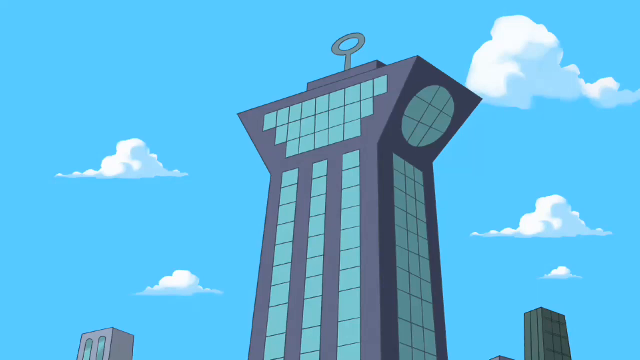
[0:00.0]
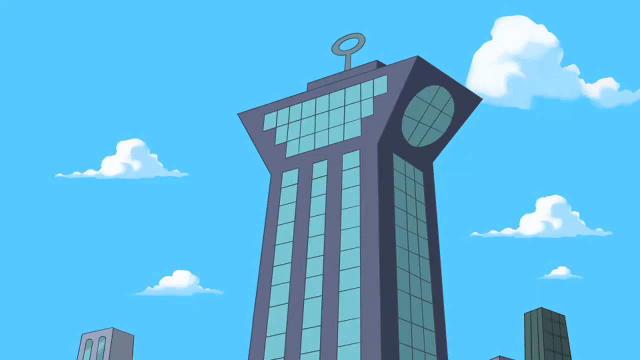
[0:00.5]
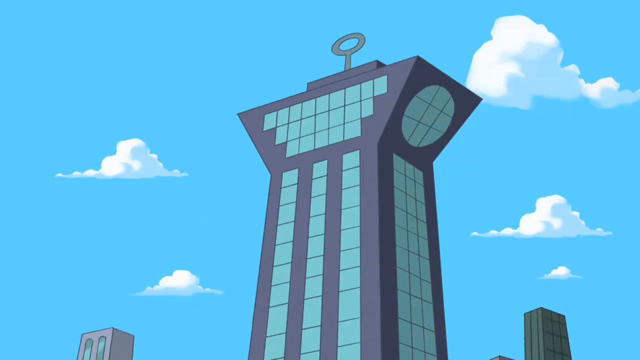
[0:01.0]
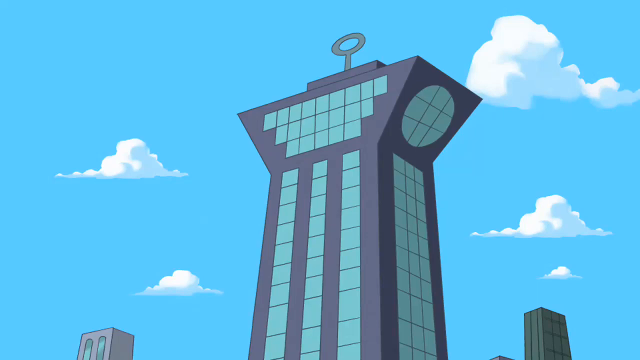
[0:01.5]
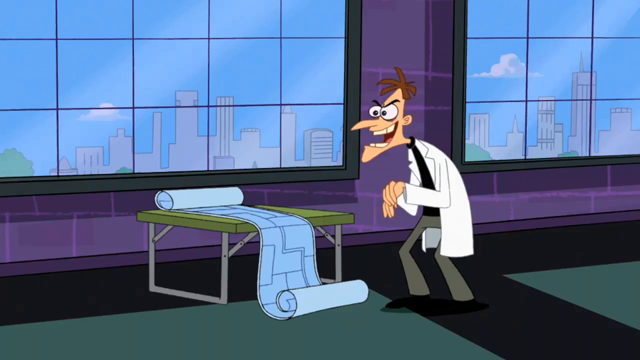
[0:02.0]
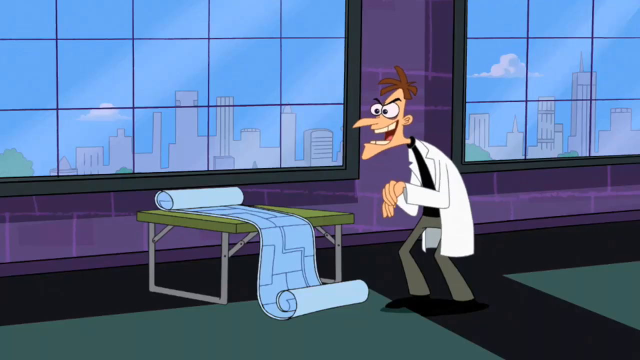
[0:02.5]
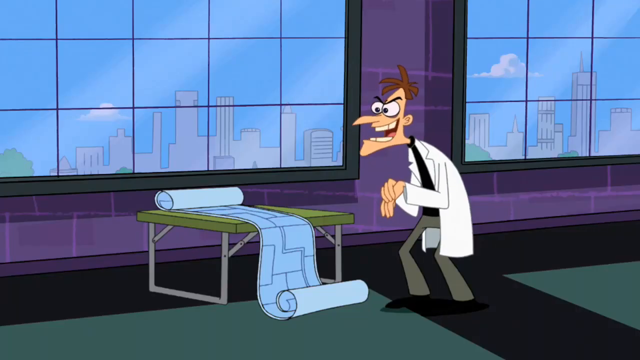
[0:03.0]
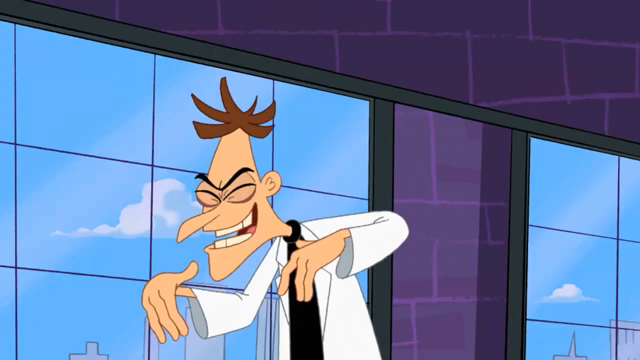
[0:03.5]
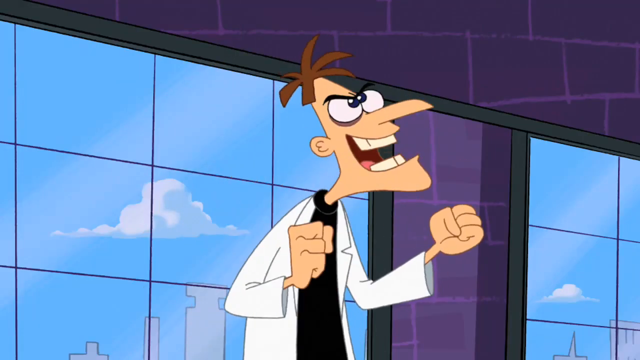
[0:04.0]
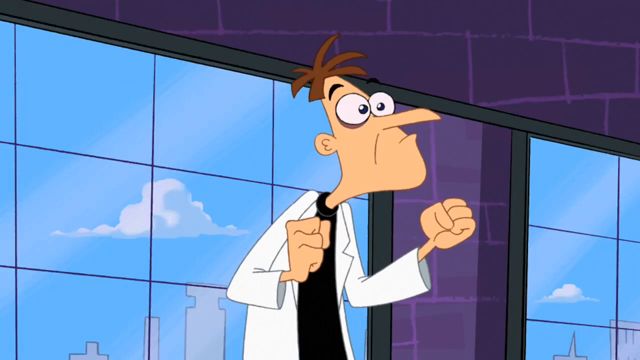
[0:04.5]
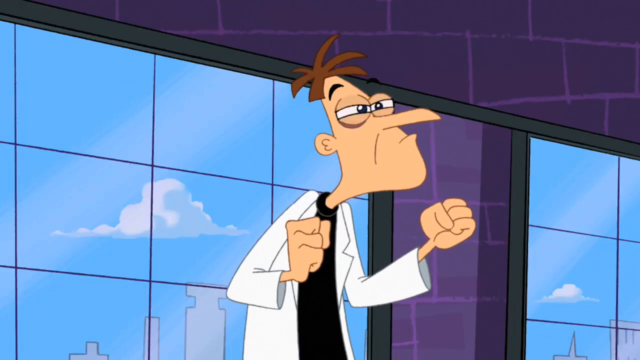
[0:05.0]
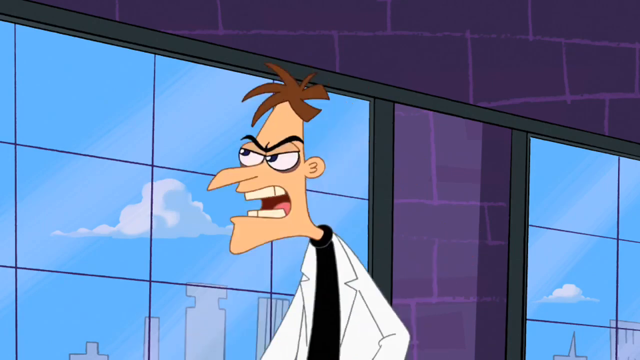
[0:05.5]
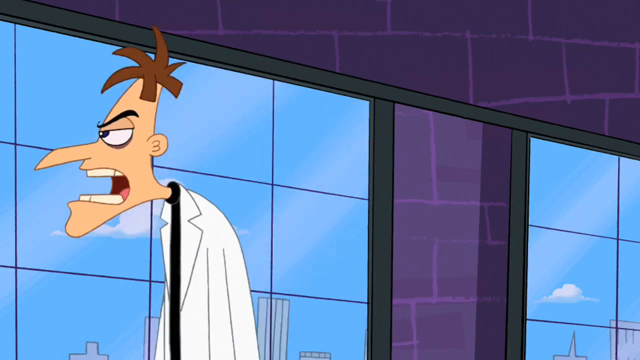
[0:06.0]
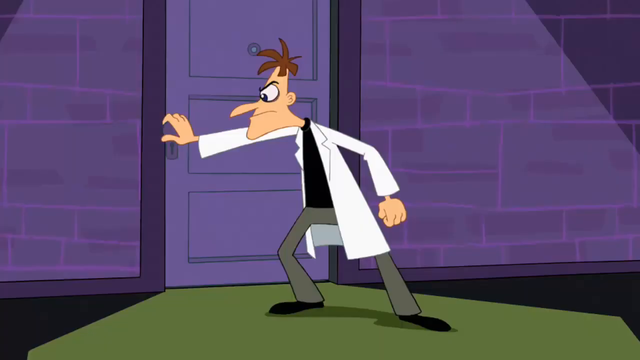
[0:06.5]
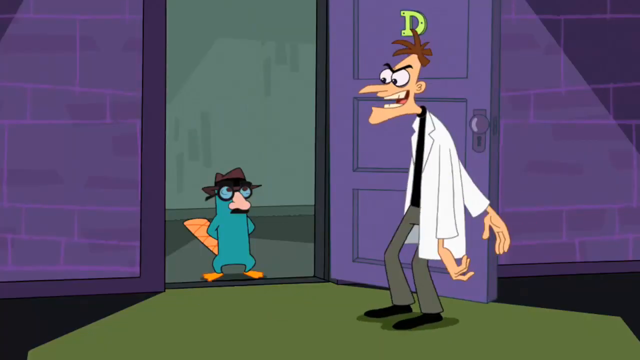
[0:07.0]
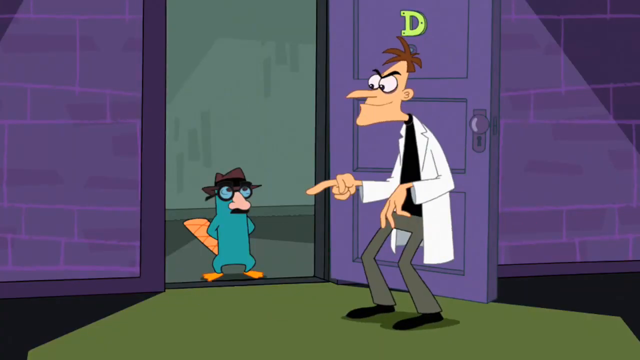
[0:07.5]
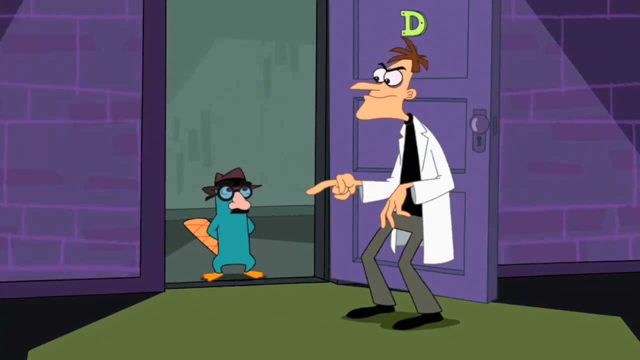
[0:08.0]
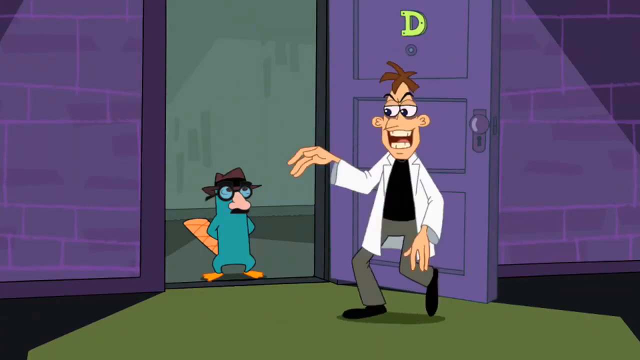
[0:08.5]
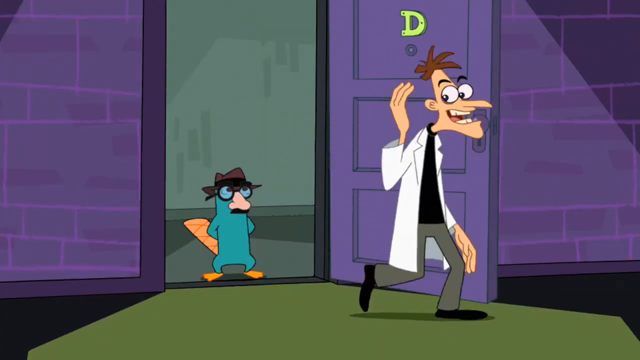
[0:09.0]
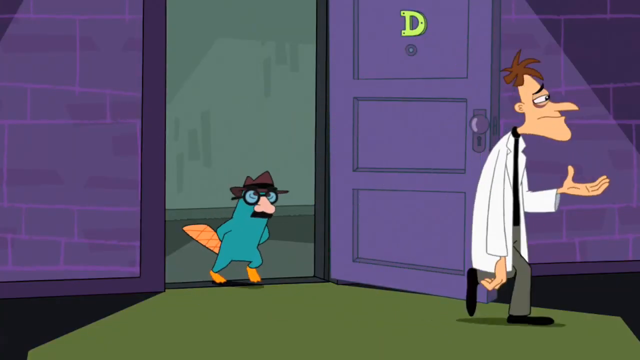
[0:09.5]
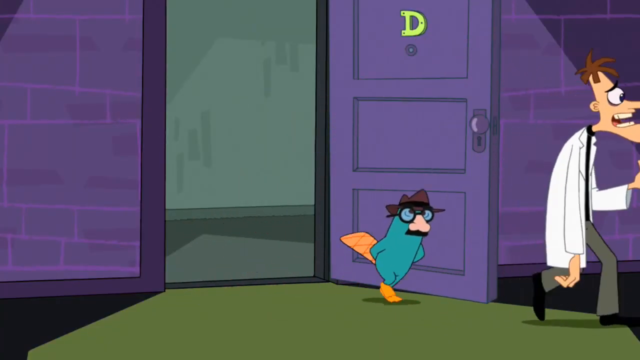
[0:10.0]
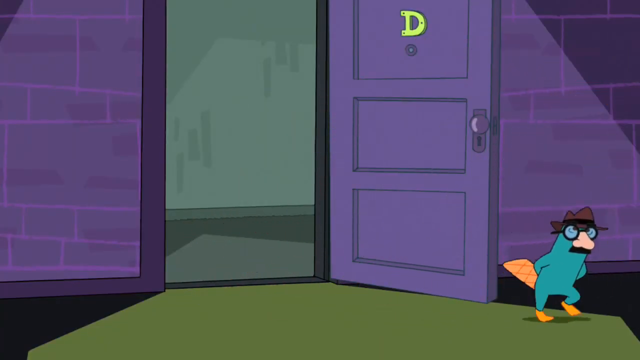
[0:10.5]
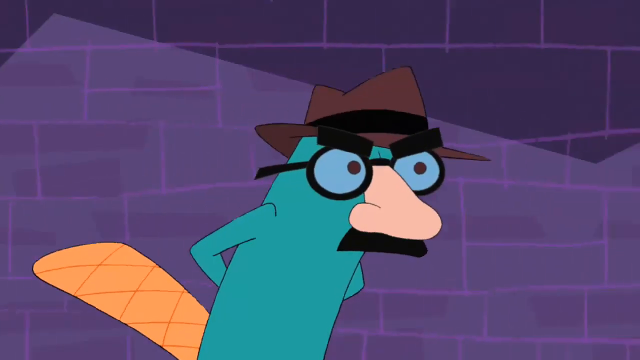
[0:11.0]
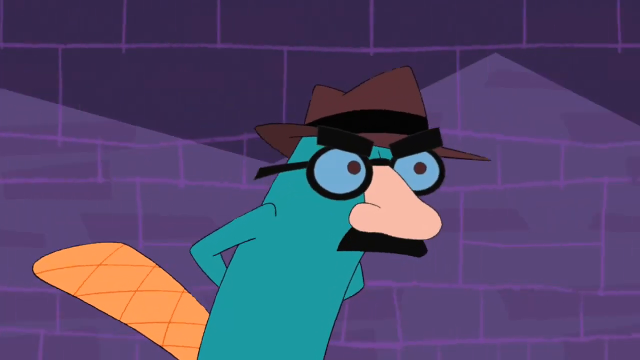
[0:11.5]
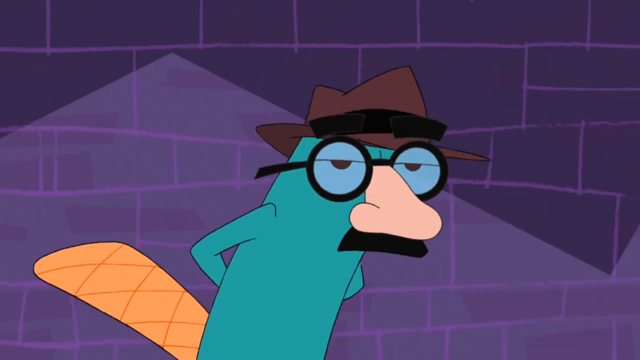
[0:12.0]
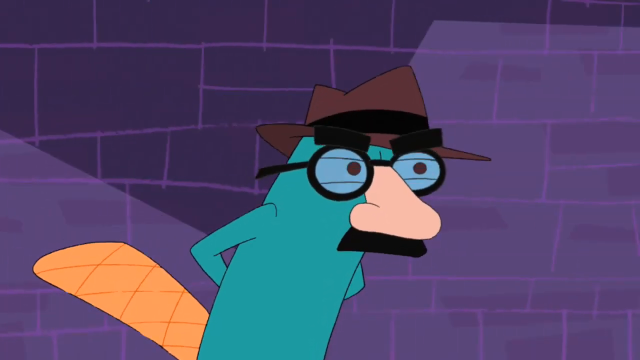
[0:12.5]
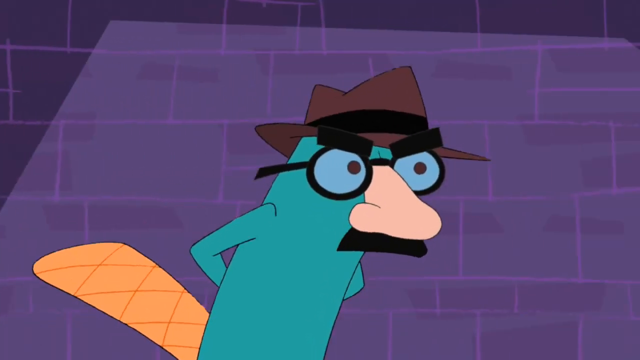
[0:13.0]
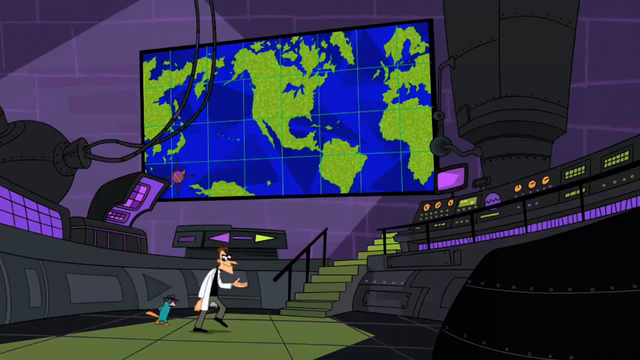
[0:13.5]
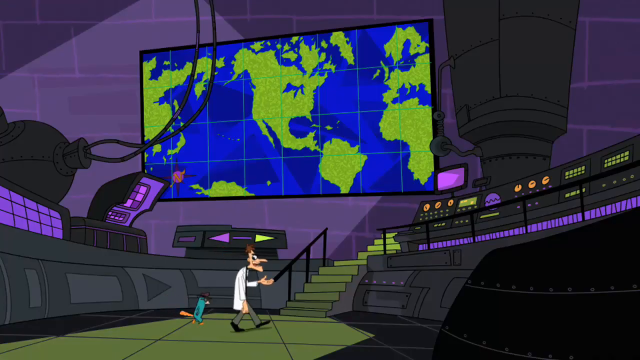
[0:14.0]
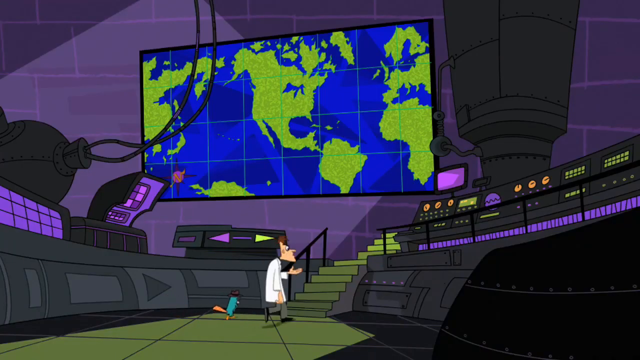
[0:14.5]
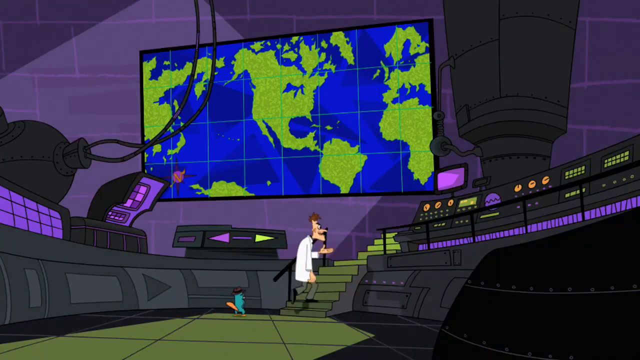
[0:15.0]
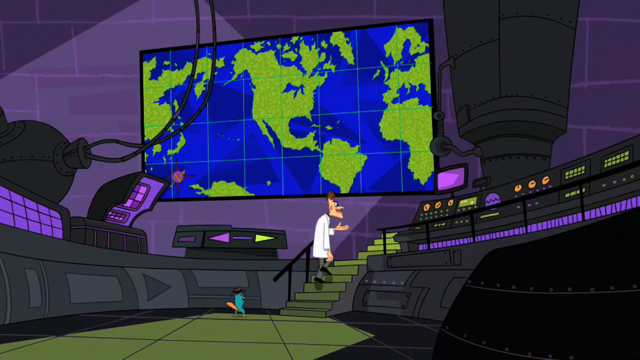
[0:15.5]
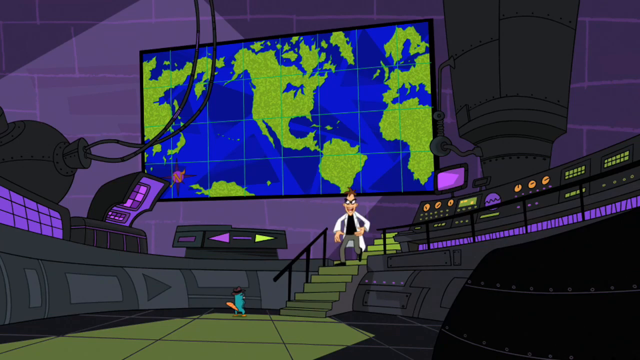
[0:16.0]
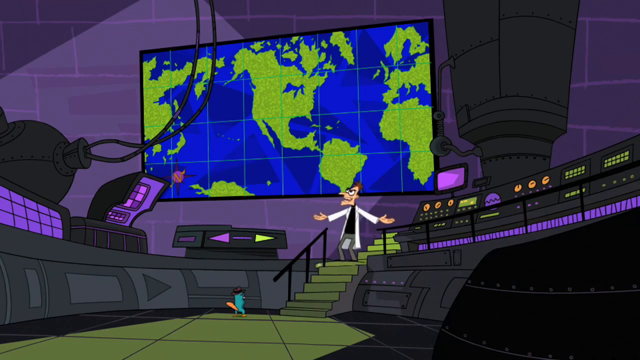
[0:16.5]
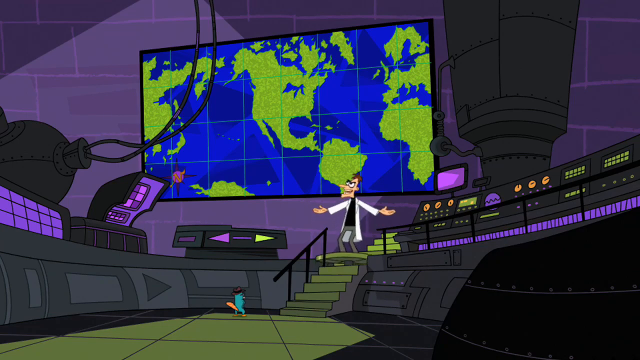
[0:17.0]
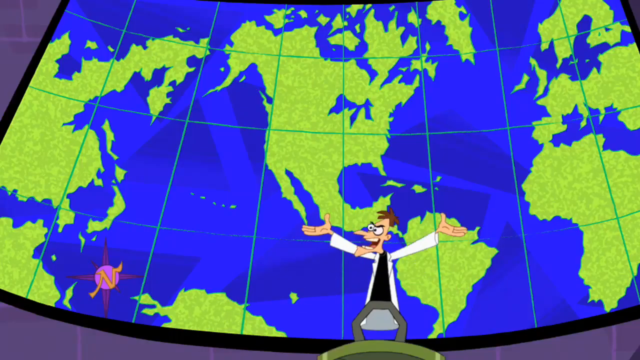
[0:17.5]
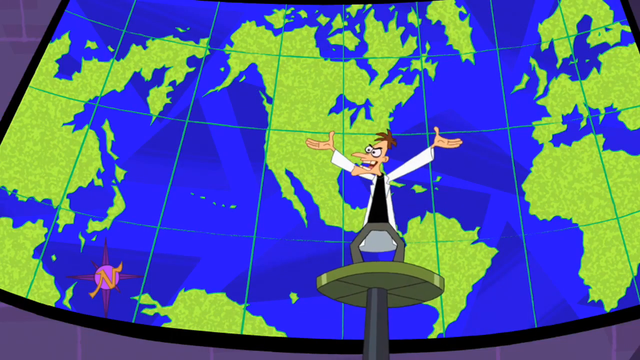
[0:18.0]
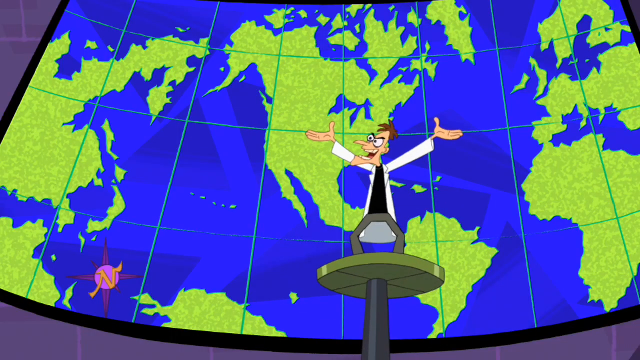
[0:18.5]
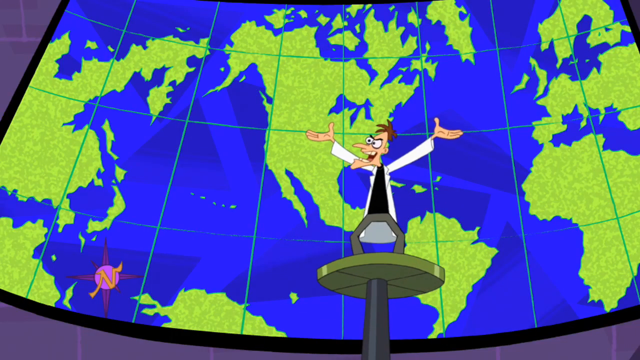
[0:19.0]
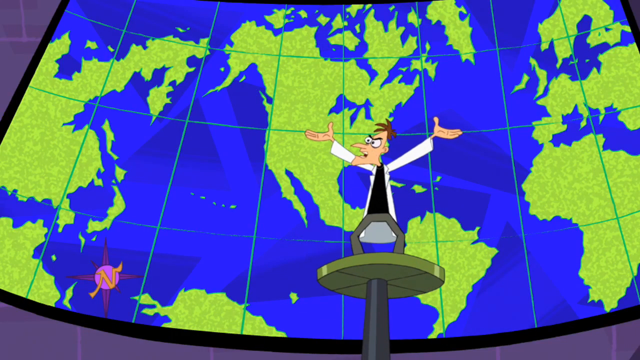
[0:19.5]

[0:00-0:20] A high-rise building is shown. Inside, there appears to be an evil man, a mad scientist type, and the building appears to be his headquarters. He opens the door and in comes a strange, small, weird-looking character that looks like it could be an animal, perhaps a bird, maybe wearing a costume. It has a huge nose and wears sunglasses, and has a mustache. The high-rise building is shown once again.